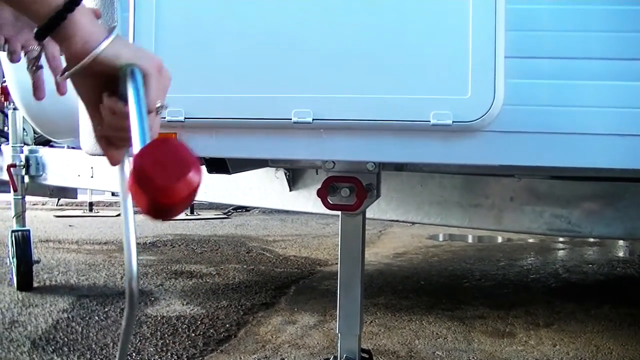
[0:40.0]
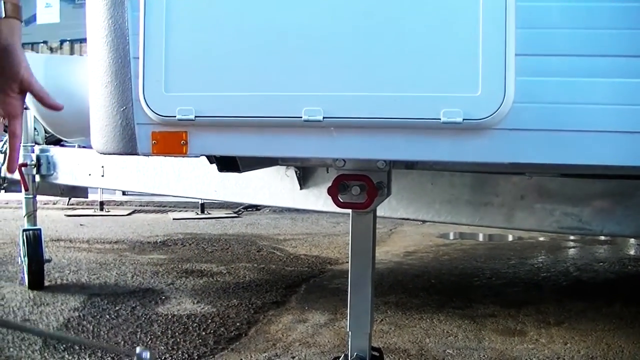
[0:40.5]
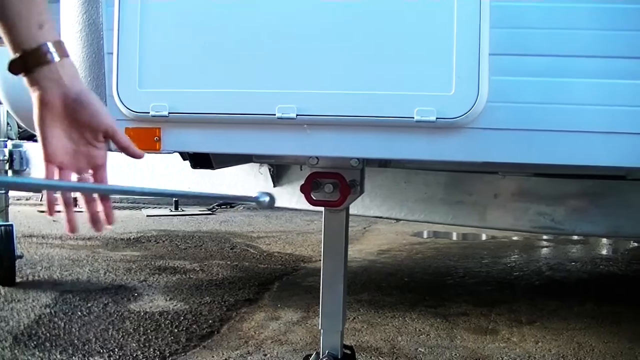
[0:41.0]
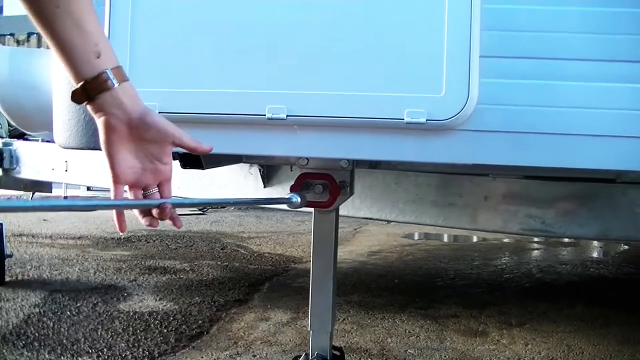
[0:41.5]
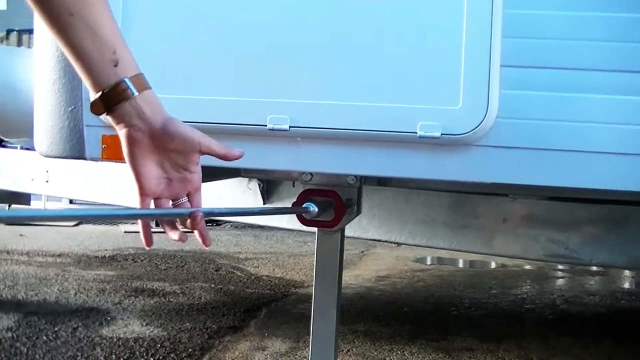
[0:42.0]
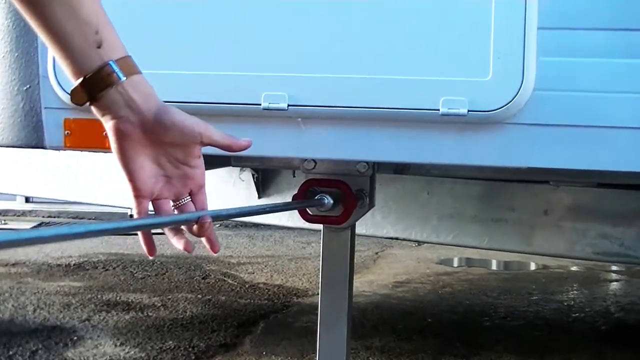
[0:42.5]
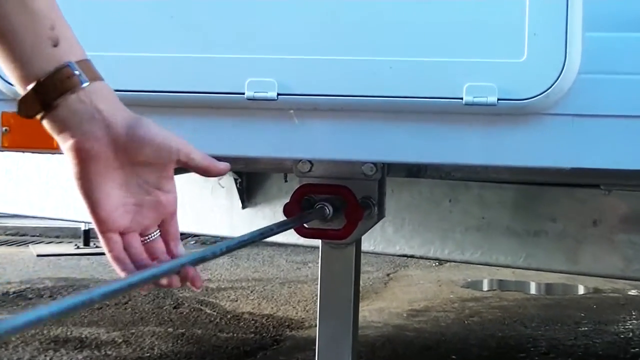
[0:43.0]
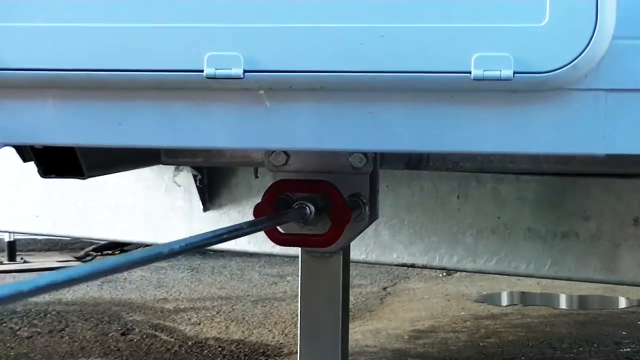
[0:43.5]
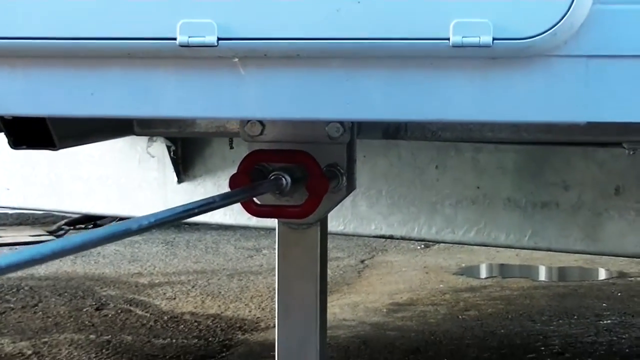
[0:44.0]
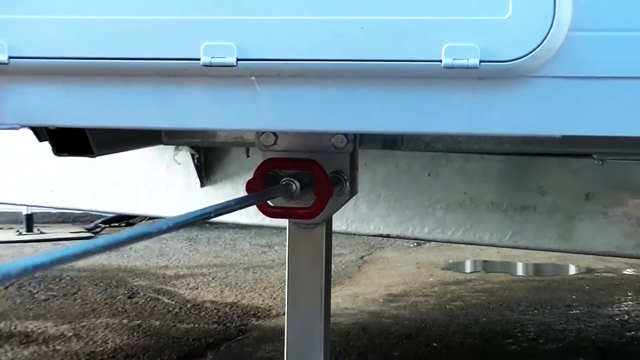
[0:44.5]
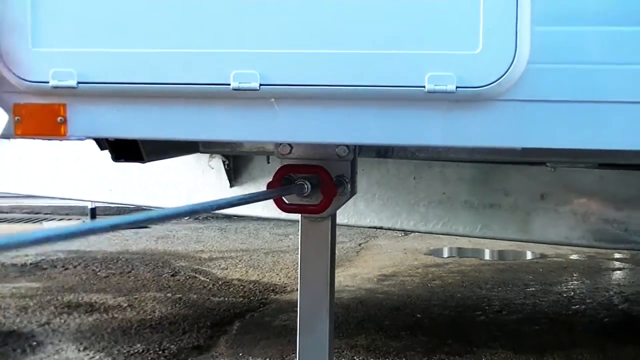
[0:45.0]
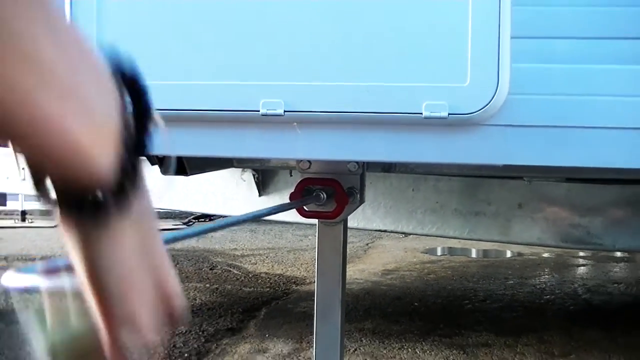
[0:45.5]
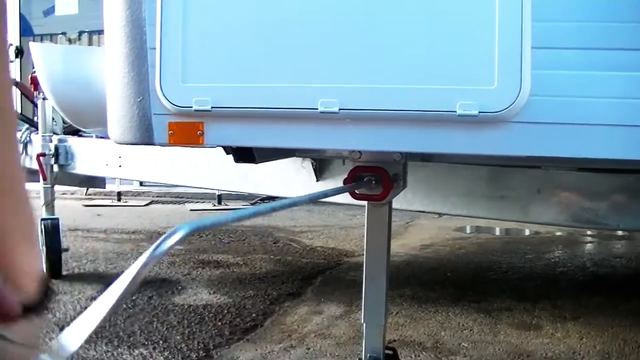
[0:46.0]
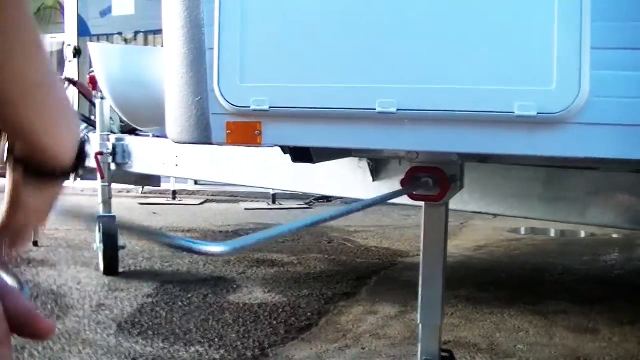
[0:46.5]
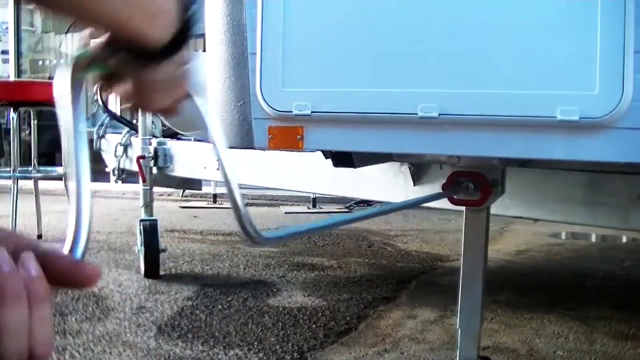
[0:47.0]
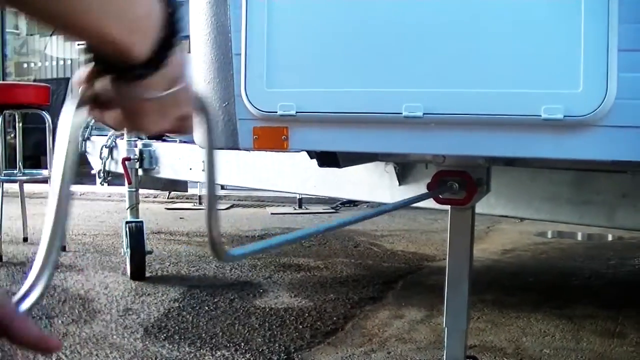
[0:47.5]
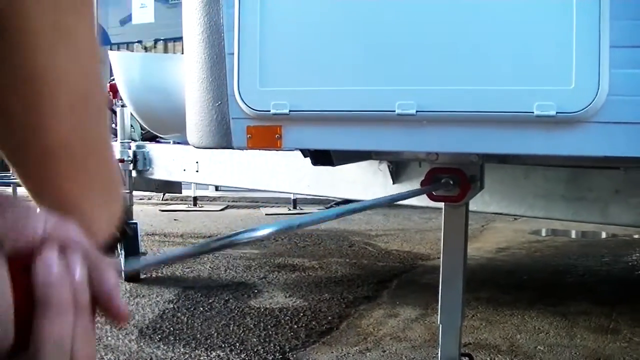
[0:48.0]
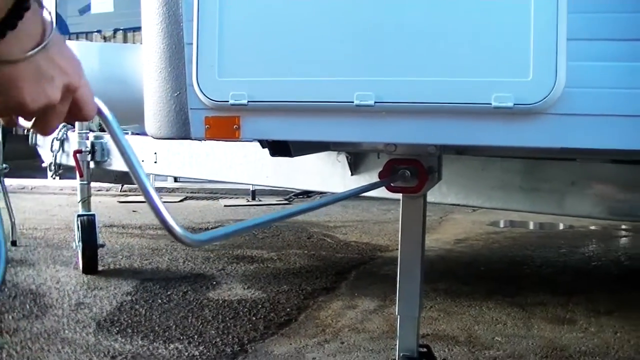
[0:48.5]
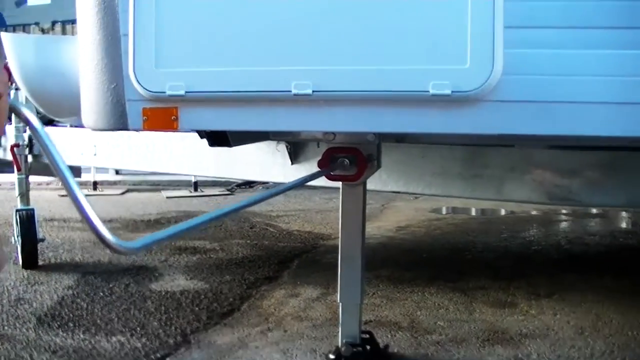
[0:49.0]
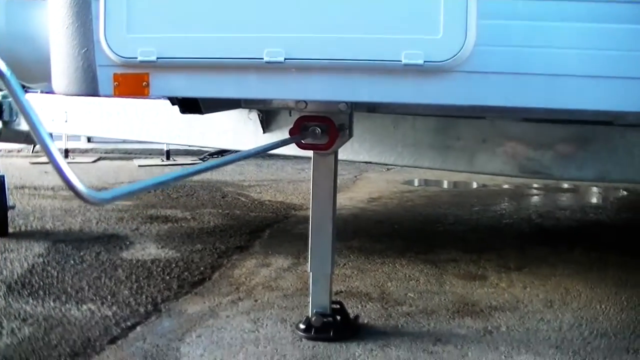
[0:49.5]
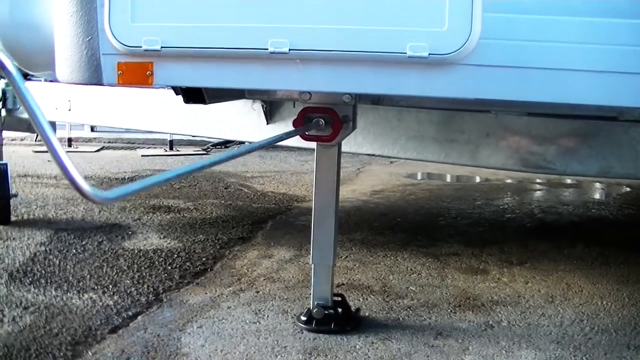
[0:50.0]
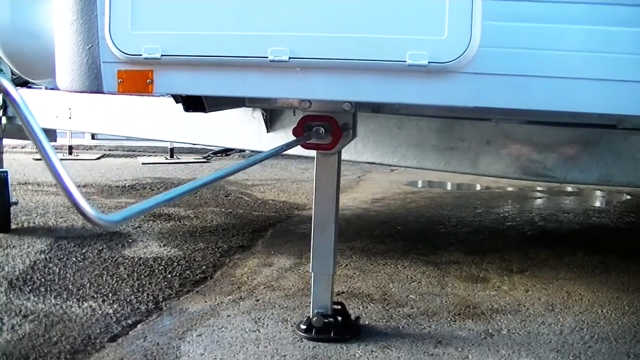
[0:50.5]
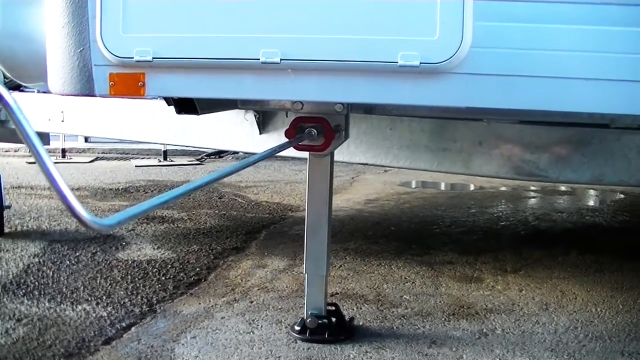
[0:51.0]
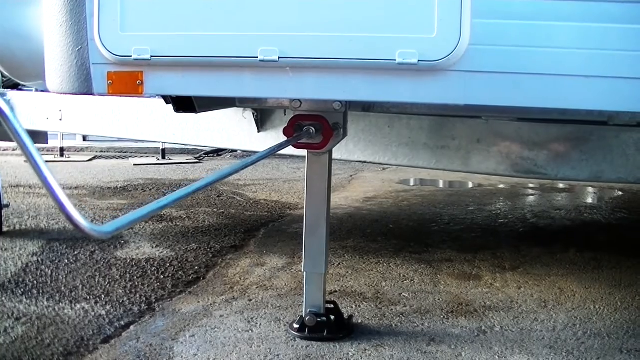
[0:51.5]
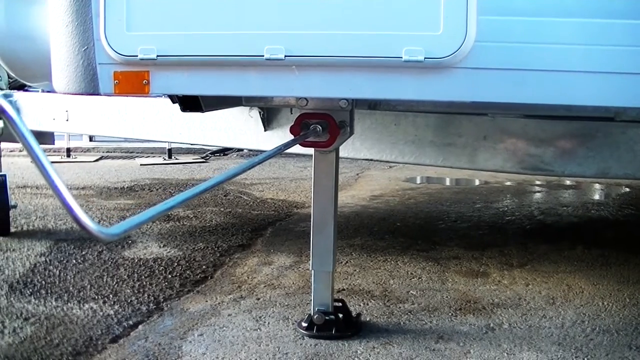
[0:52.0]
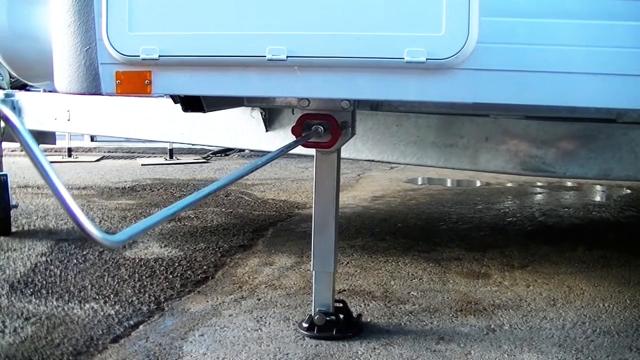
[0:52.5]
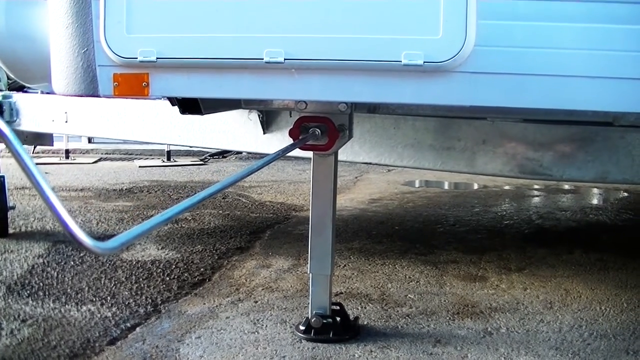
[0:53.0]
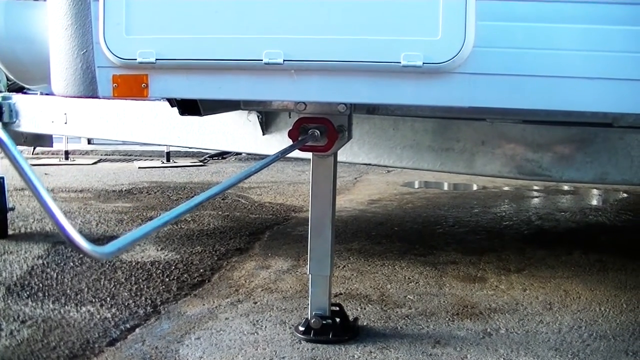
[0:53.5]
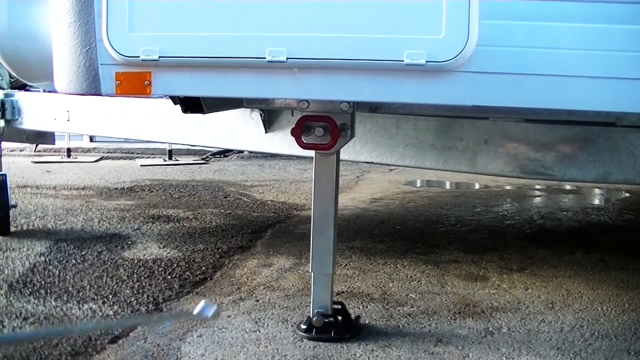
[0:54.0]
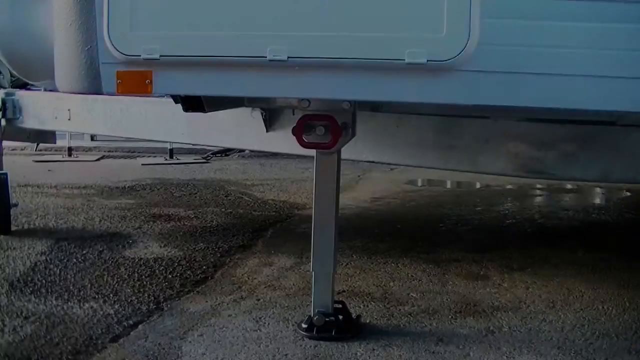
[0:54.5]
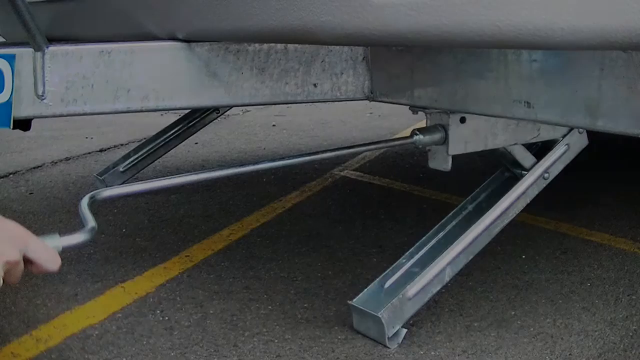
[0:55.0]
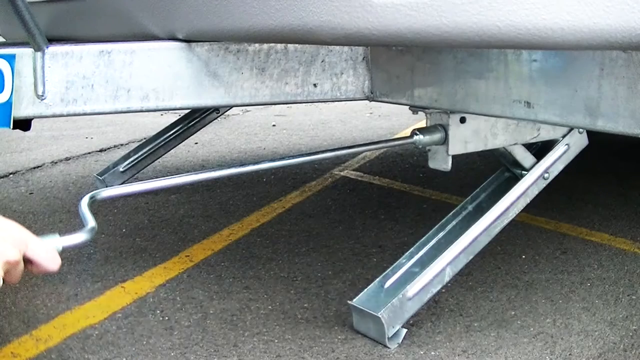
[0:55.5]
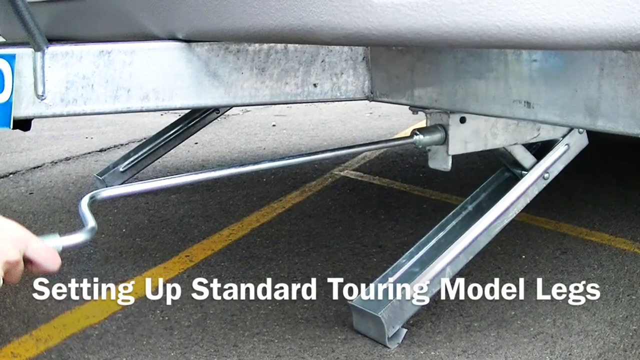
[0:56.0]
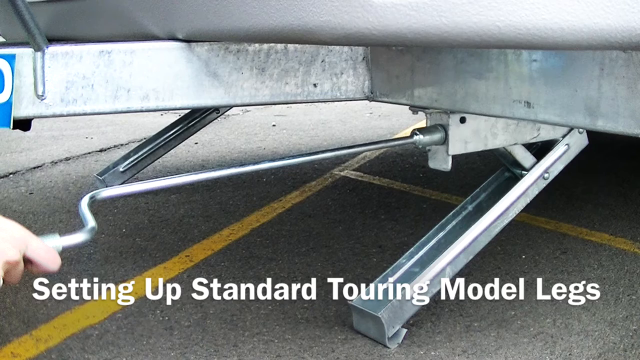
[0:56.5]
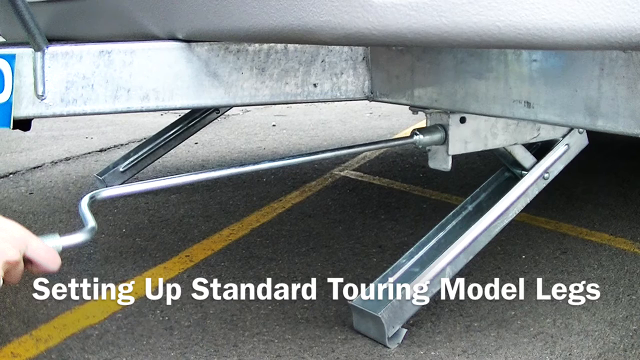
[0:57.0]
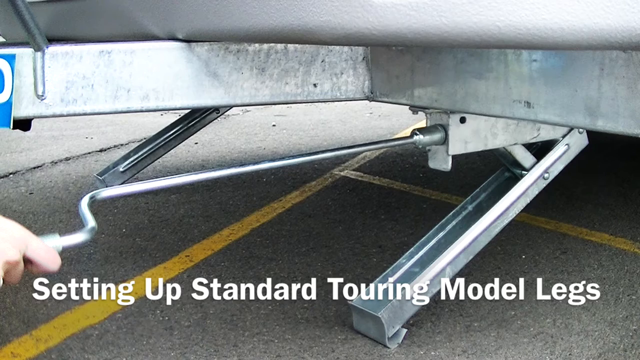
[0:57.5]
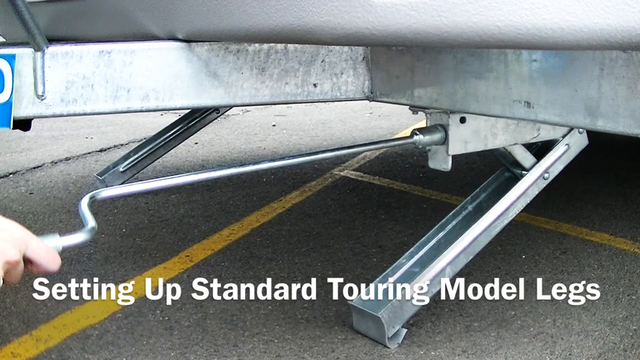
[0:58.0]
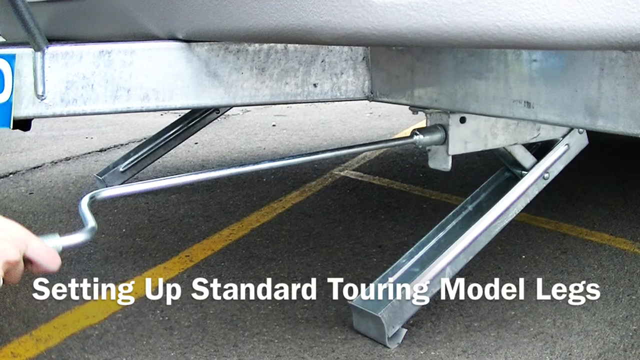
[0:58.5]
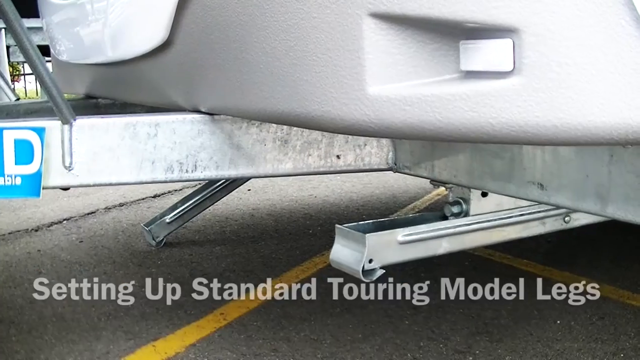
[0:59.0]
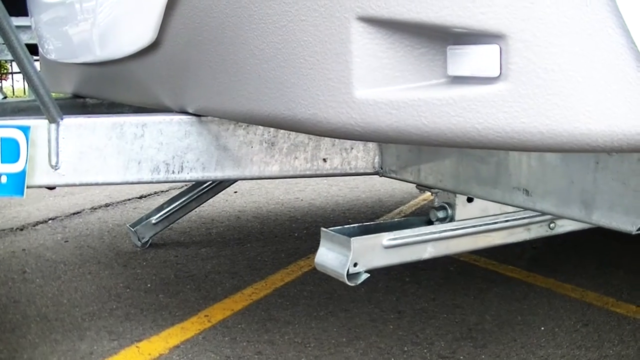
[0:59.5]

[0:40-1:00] The person stands up; only their hands are in the corner, the rest of their body off screen. The right hand reaches down, wrapped around the top part of the tool, which is kind of like a sideways P without the back end, holding on to the part that humps up. On the left side a little stand comes down with a wheel on it. They stick the bar toward the red, and the left hand comes in underneath the bar with the fingers under it to help guide it into place. The red end has a little kind of nut that fits onto the bolt in the middle of the red circle. They slide it in and start cranking, the right hand going over to the right and back under to the left, clockwise, really fast. The right hand holds a little part that humps up, with the red knob at the end, and cranks really hard. The camera pans back a little, showing some fence line in the distance, then moves back in a little closer, showing that this makes the leg go down to stabilize it more on the ground. The video then cuts to underneath. A metal crossbar goes across about halfway from the left, then bends and goes off the right side. Underneath it is a little rectangular box with long silver braces under it that are back legs. A bar comes off it going left; this is a different kind of bar that goes straight for about three feet, makes a little six-inch crook, and then goes six inches back to the left. A hand, barely in on the side, holds on to the end of the bar. Across the bottom, gray and white text reads "setting up standard touring model legs." Red lines are visible on the concrete underneath.